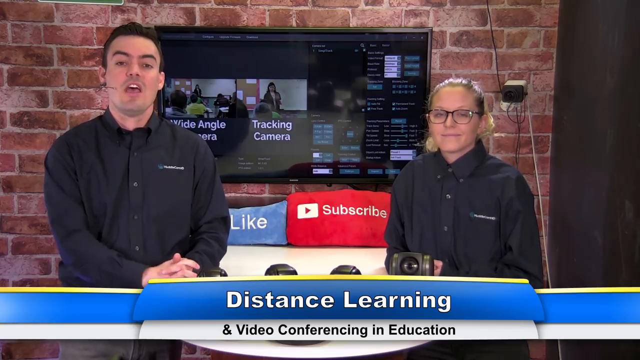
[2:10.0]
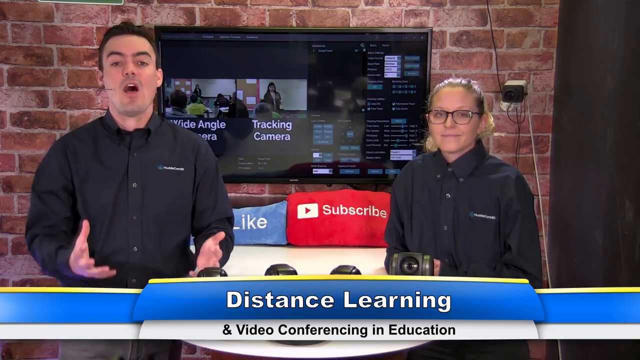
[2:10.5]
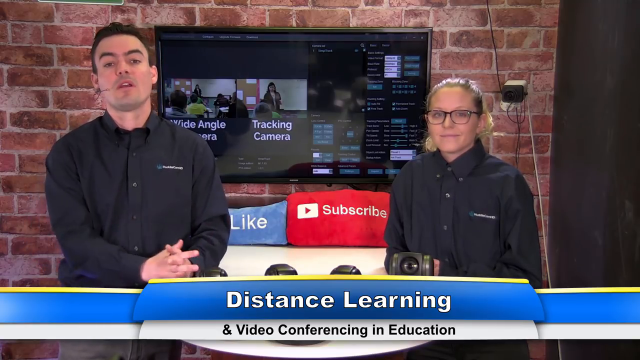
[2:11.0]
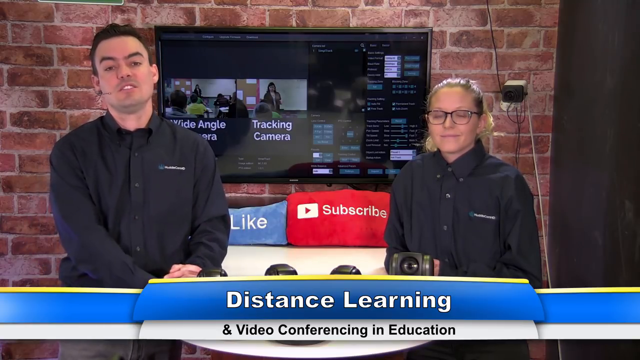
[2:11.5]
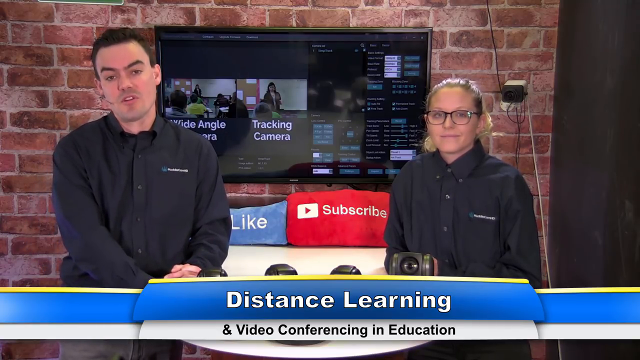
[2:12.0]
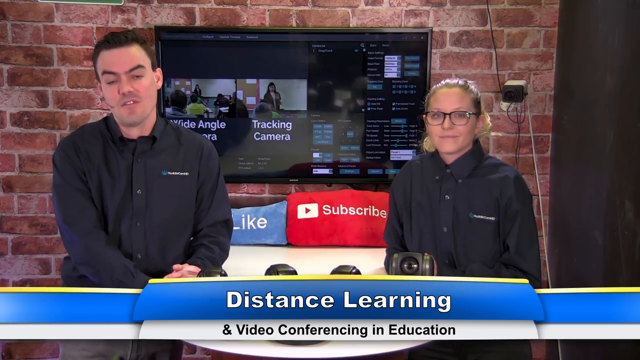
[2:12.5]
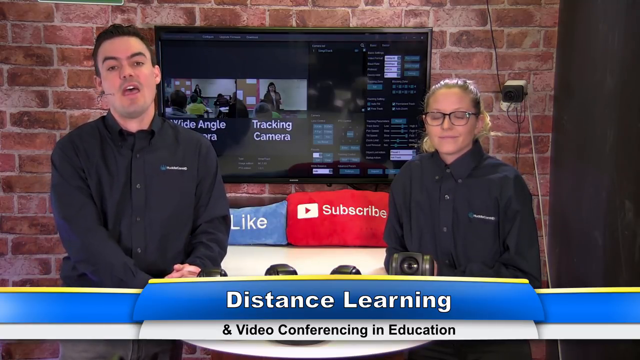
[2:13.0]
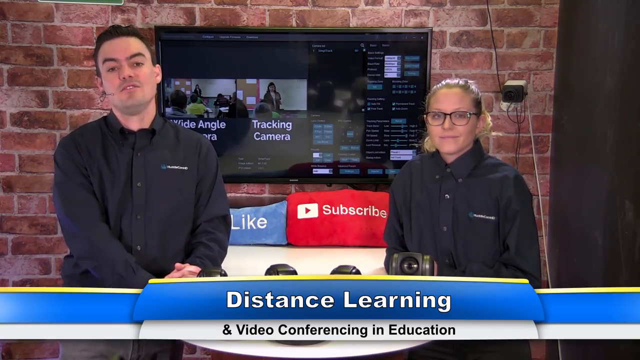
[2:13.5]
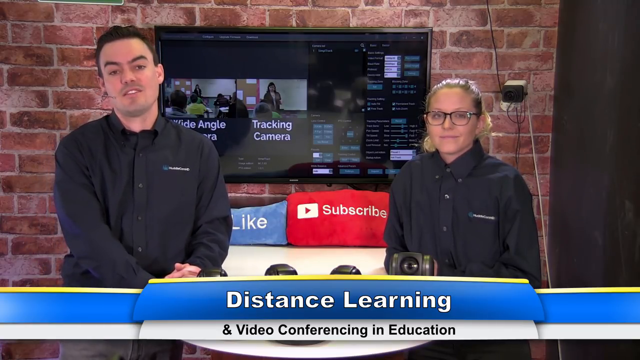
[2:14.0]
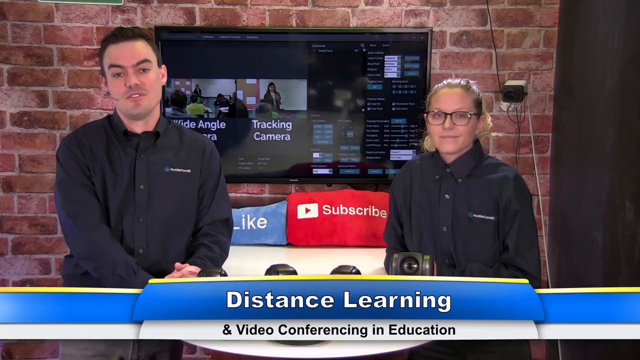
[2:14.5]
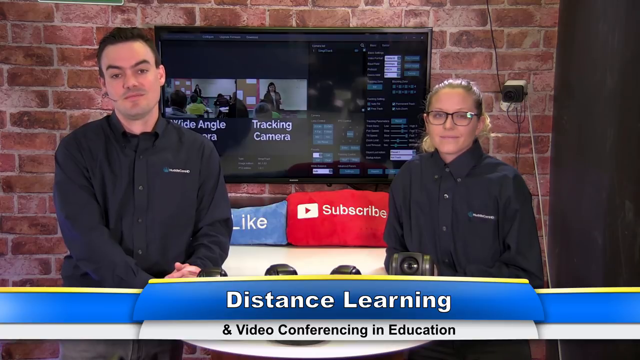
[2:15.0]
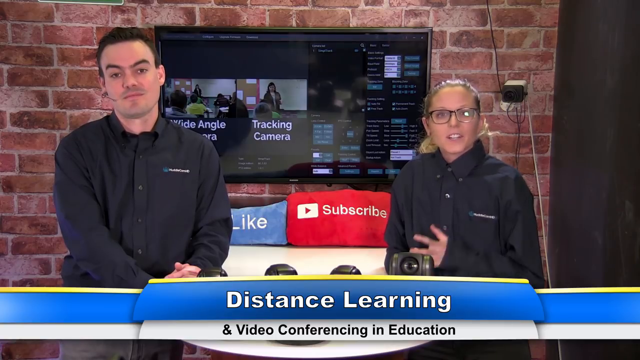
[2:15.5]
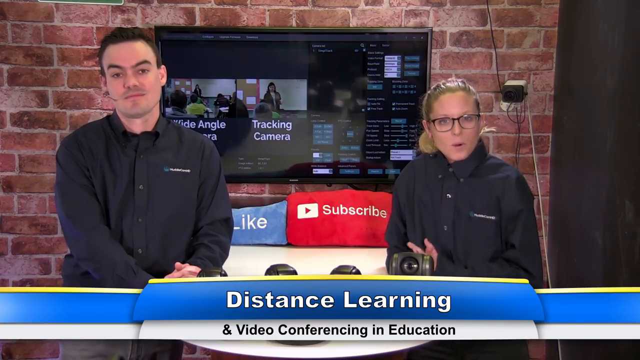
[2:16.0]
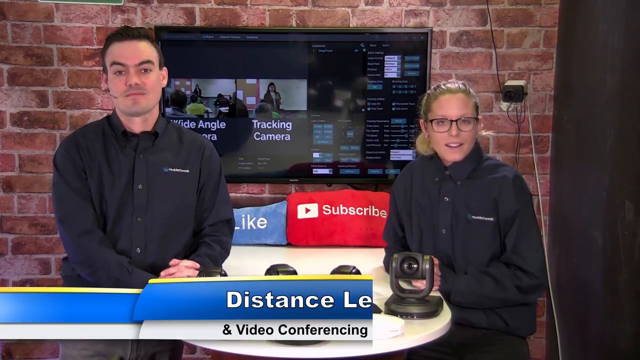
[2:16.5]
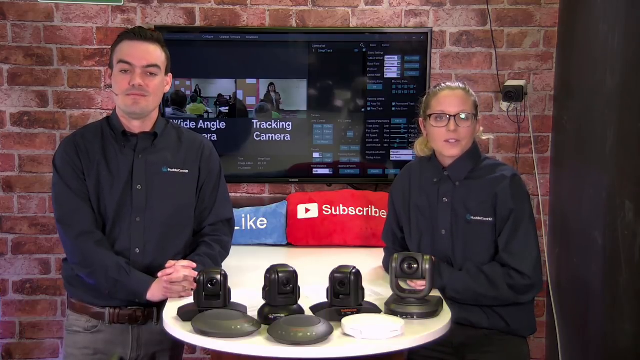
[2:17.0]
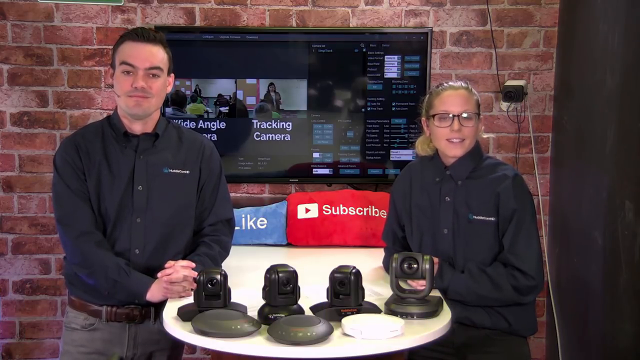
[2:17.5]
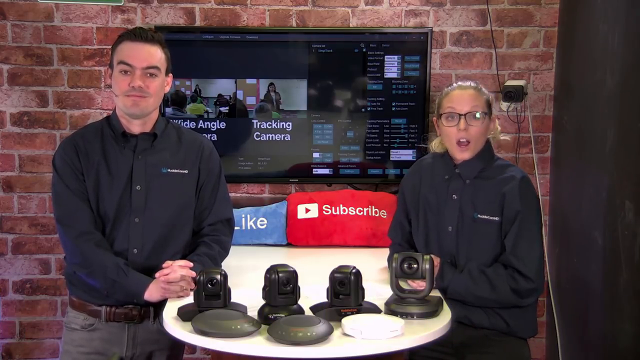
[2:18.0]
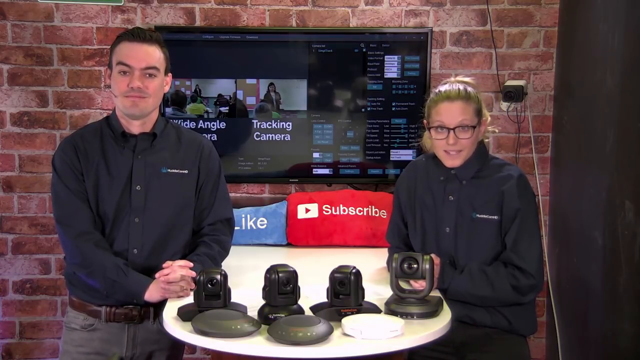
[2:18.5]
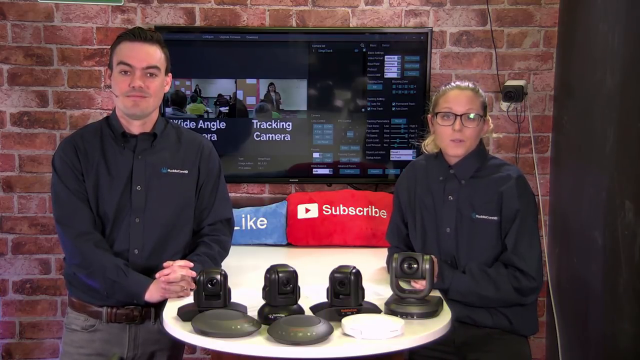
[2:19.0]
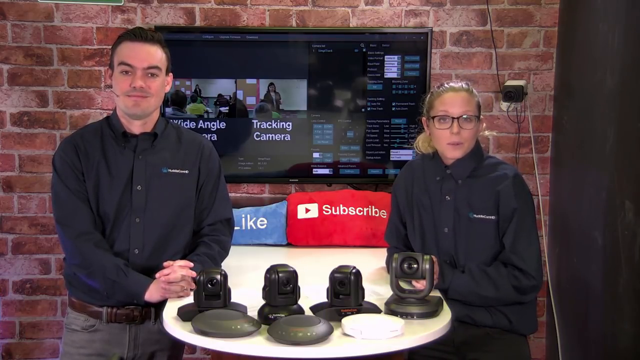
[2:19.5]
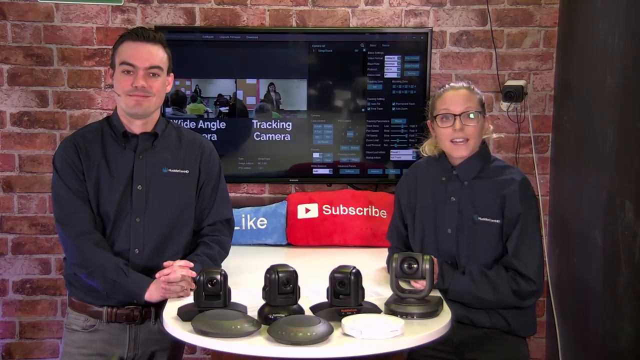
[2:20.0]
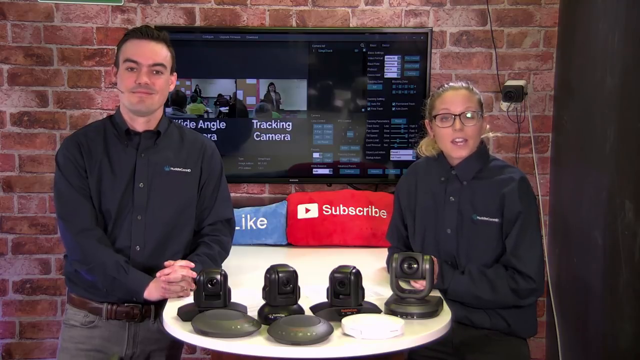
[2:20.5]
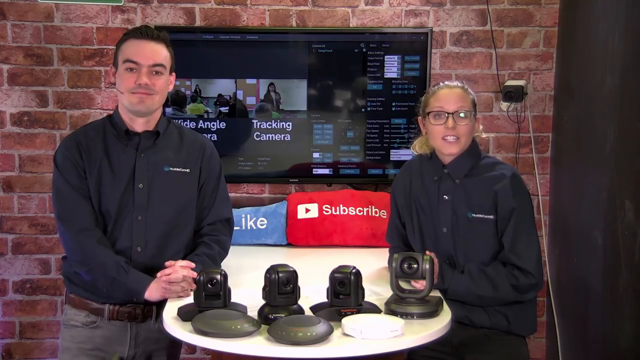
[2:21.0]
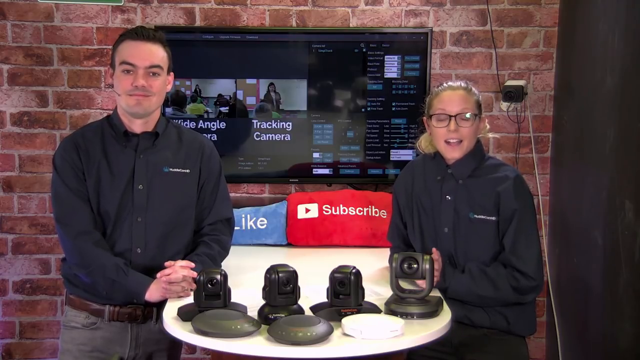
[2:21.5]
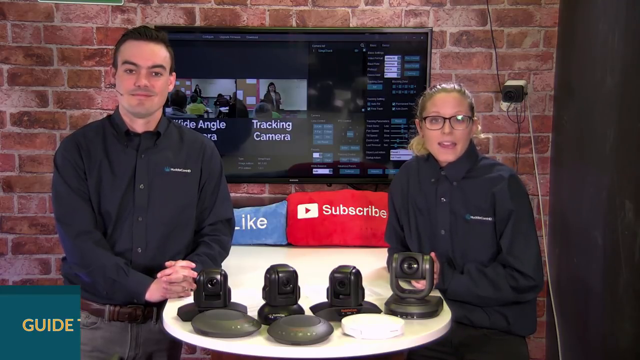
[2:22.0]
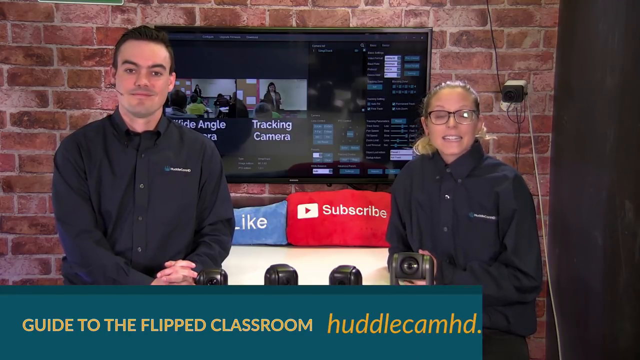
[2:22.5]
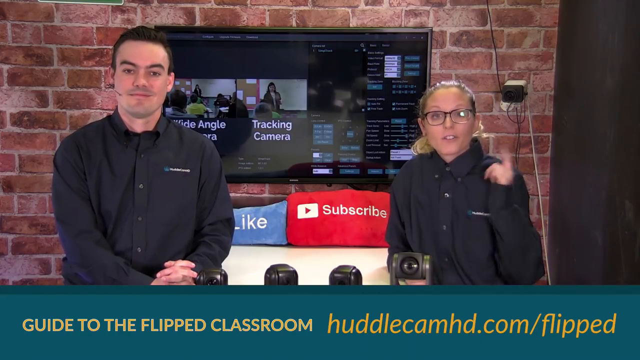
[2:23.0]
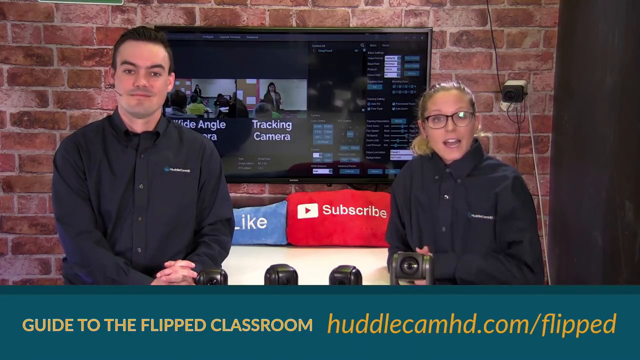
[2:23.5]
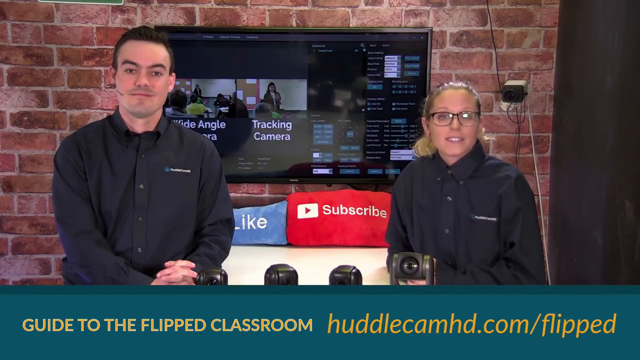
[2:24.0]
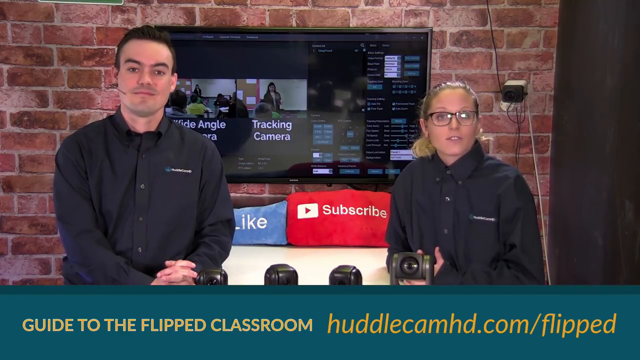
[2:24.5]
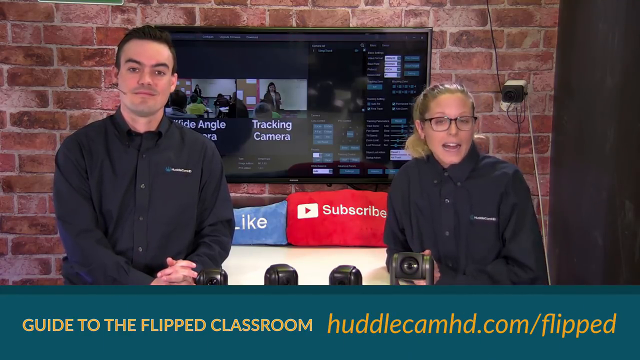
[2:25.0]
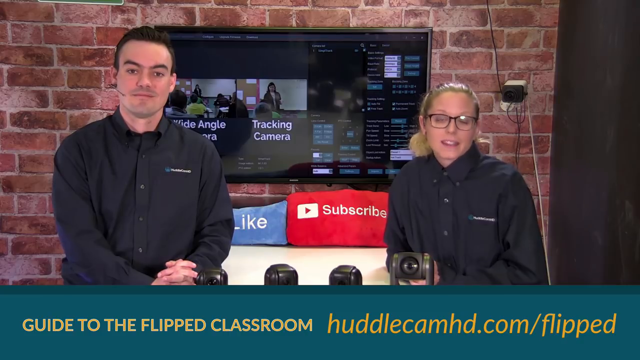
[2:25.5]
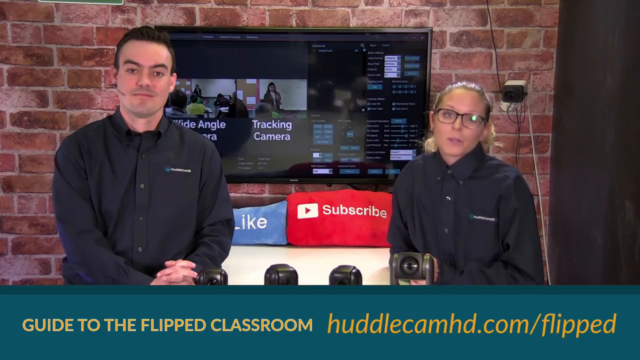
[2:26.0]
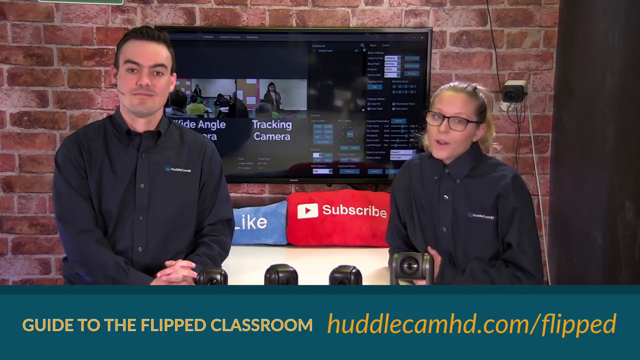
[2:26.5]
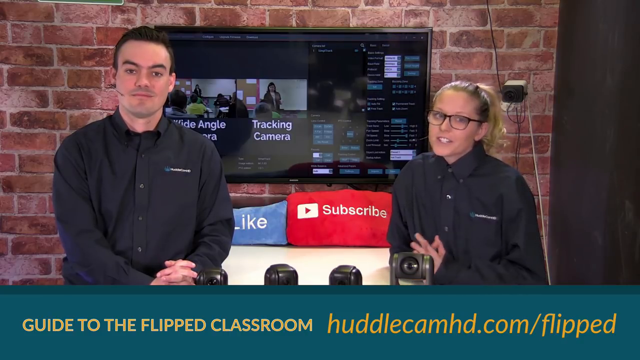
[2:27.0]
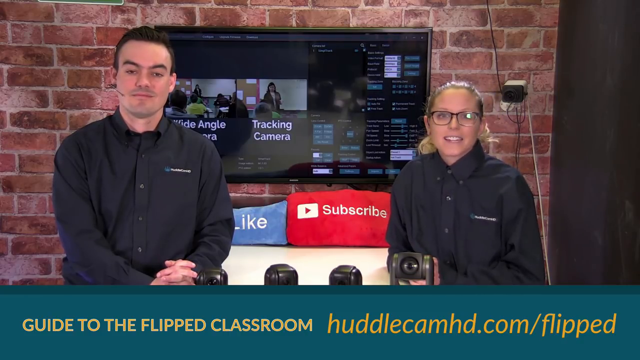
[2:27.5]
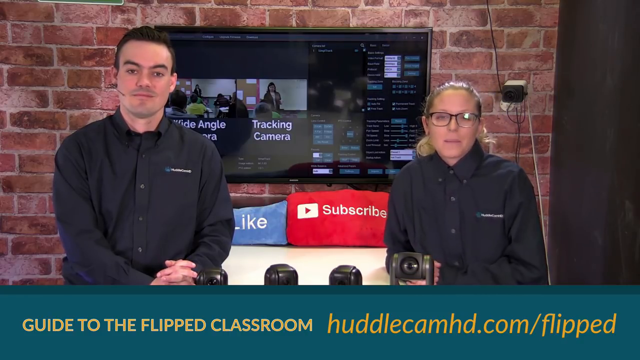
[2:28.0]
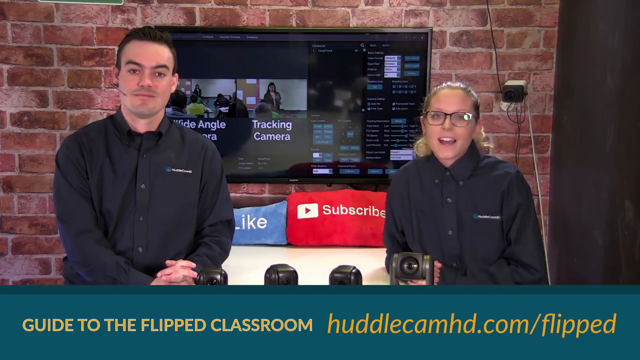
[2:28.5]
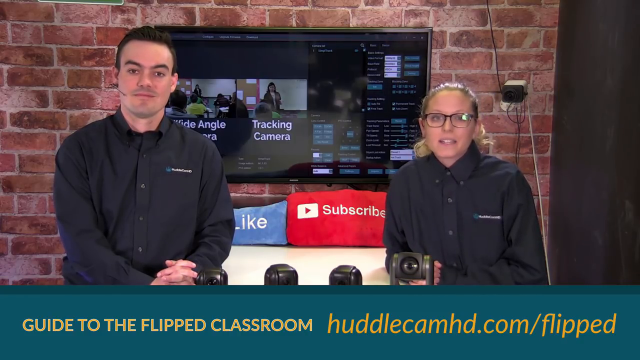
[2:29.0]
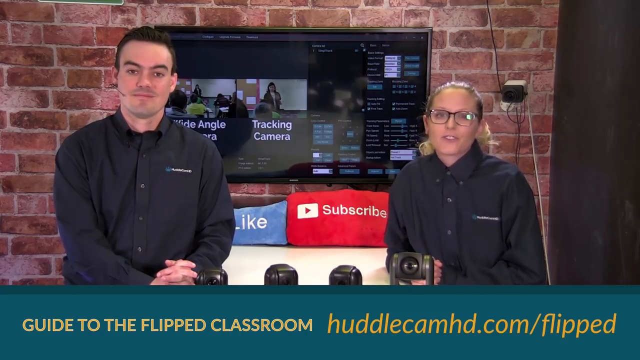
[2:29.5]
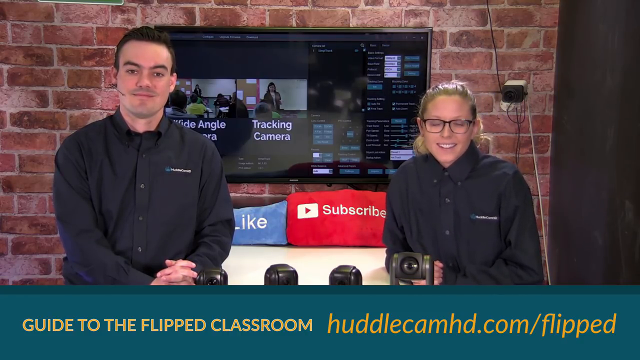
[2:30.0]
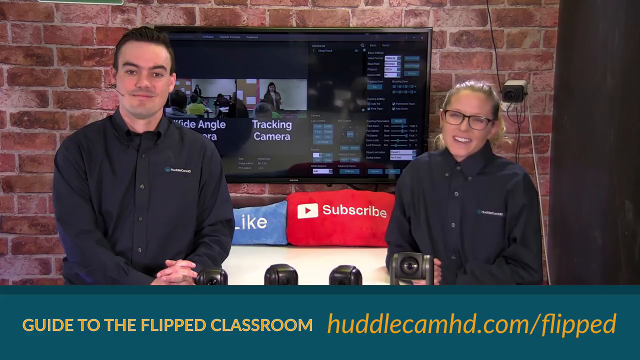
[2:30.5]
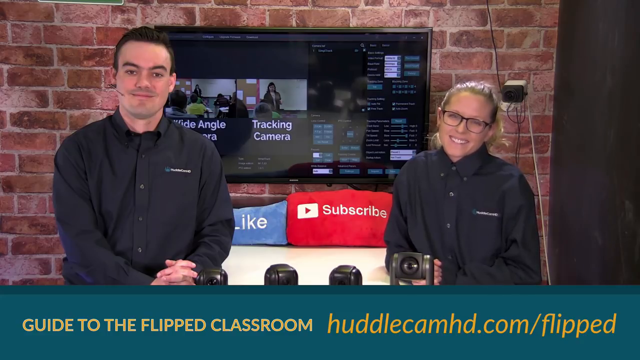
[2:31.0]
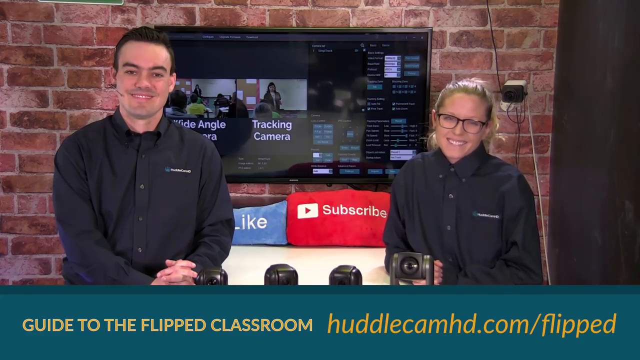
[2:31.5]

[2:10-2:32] The man on the left talks to the camera, seen from the front. Text below reads "distance learning and video conferencing and education." The woman on the right listens, then begins speaking a couple of seconds later, gesturing with her left hand and putting it back down. The man's hands are interlocked and resting on the mini white table, and so are the woman's. She continues to speak enthusiastically to the camera. Text at the bottom now reads "guide to the flipped classroom," and on the right is "huddlecamhd.com/flipped." She points down to the desk and continues talking while the man on the left eagerly listens and stares at the camera. After she finishes speaking, they both smile and the video ends.